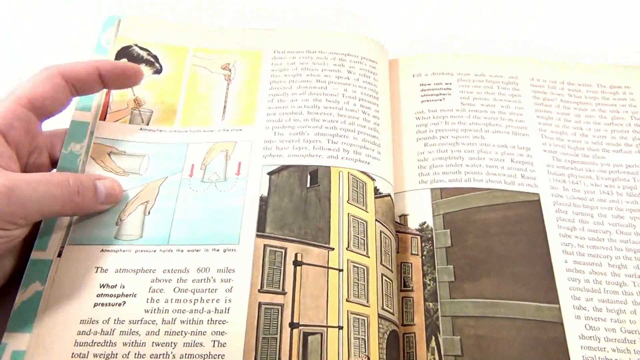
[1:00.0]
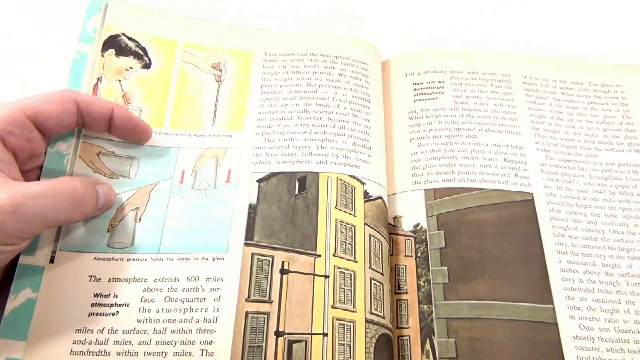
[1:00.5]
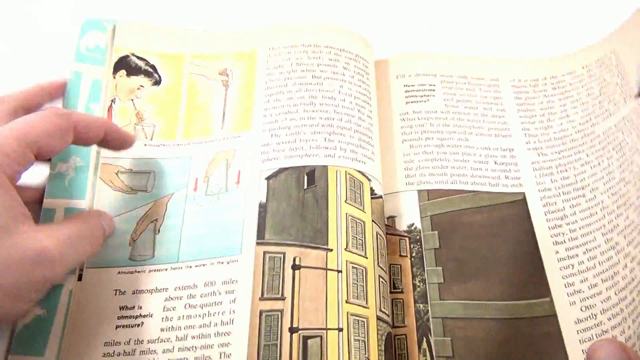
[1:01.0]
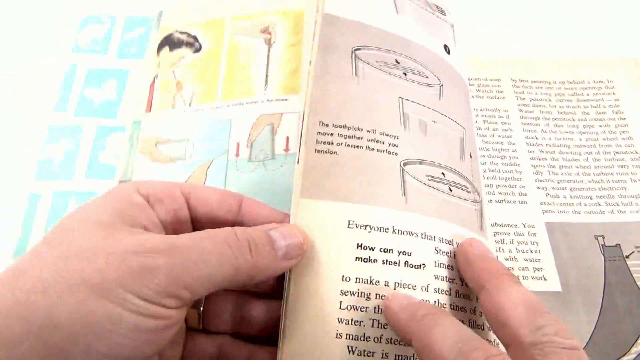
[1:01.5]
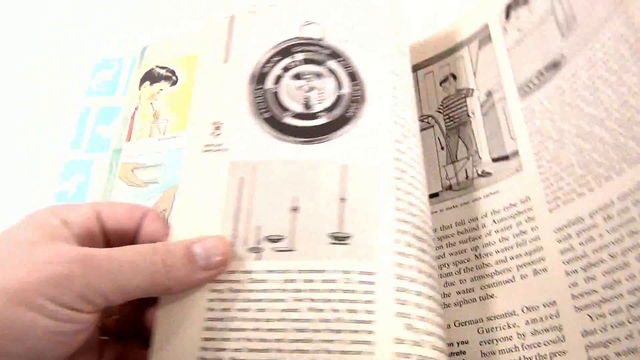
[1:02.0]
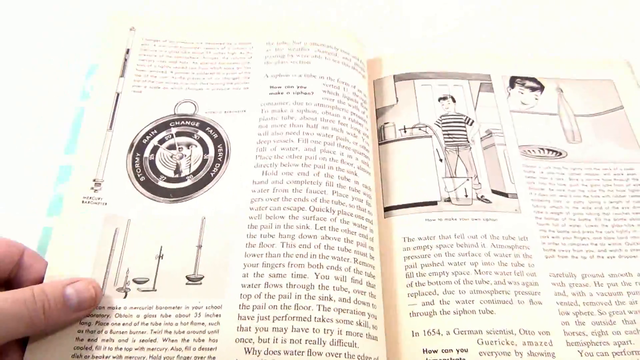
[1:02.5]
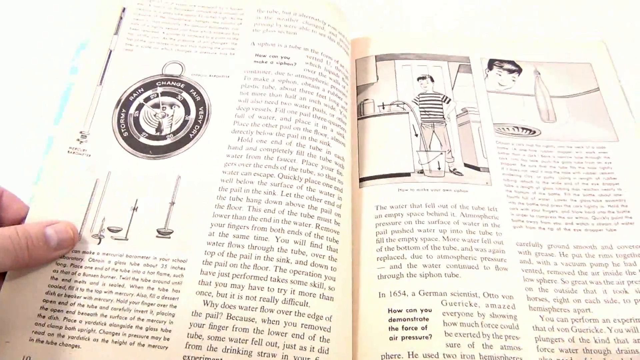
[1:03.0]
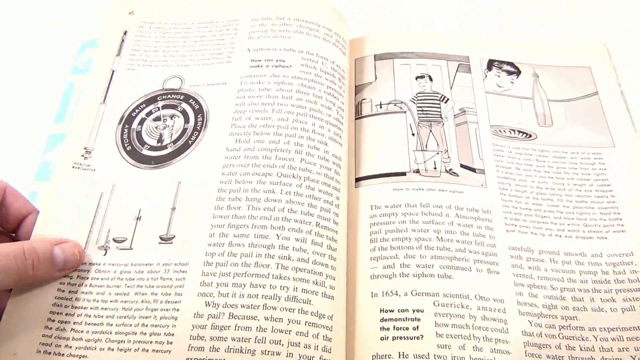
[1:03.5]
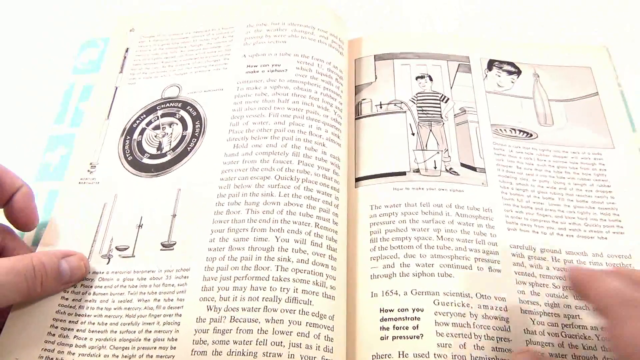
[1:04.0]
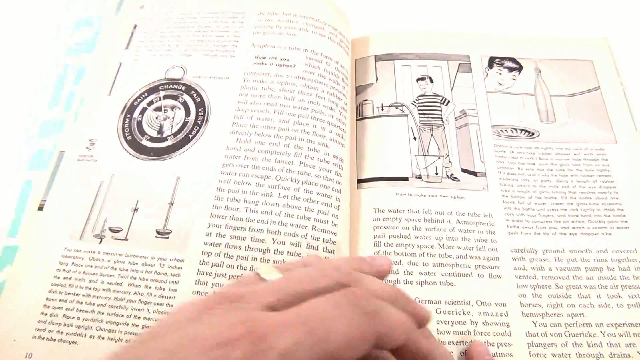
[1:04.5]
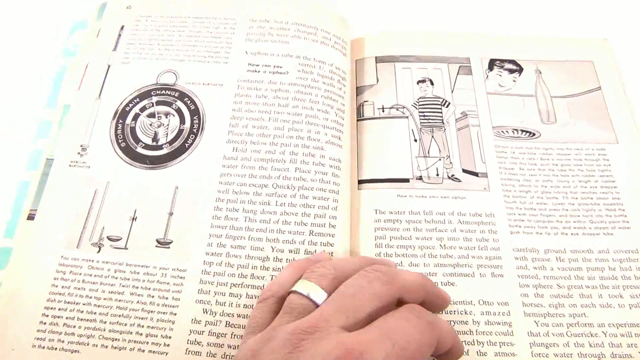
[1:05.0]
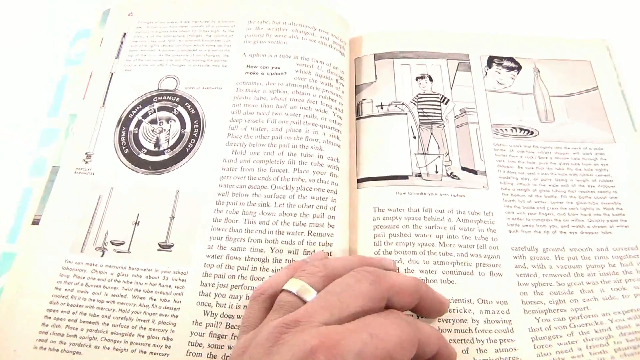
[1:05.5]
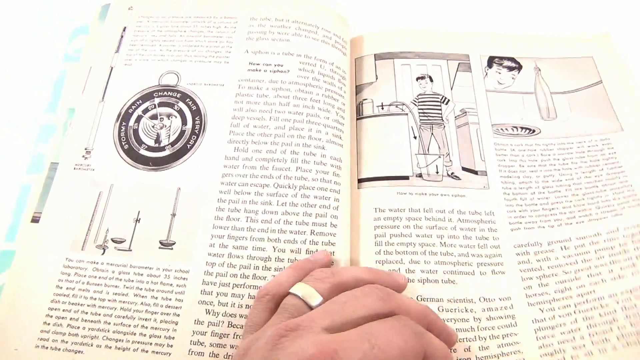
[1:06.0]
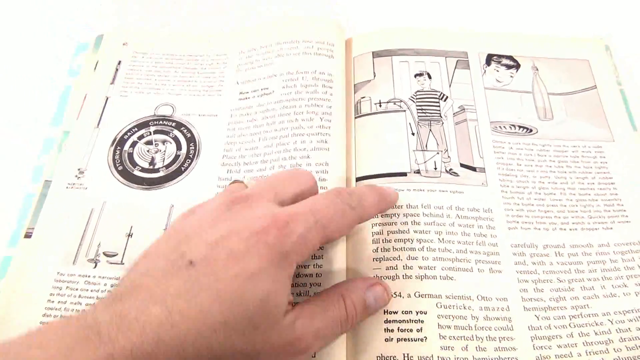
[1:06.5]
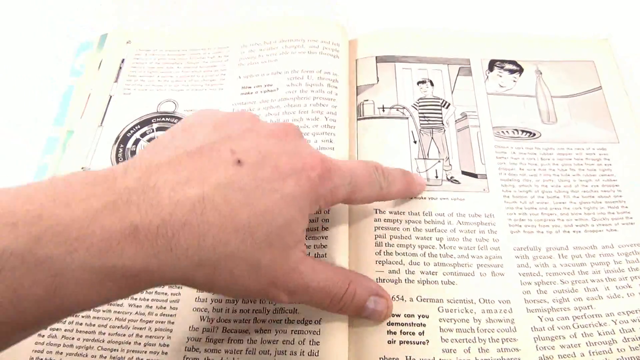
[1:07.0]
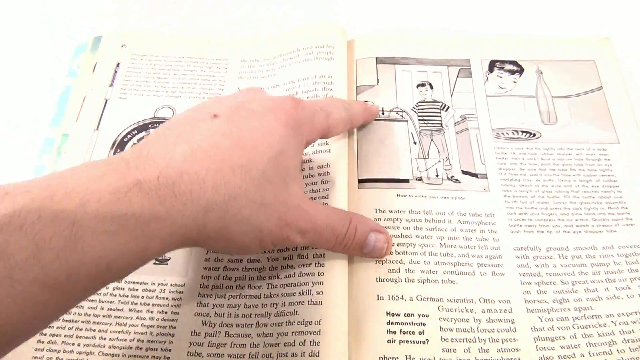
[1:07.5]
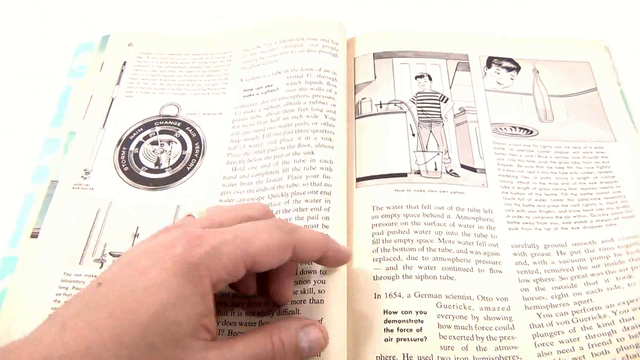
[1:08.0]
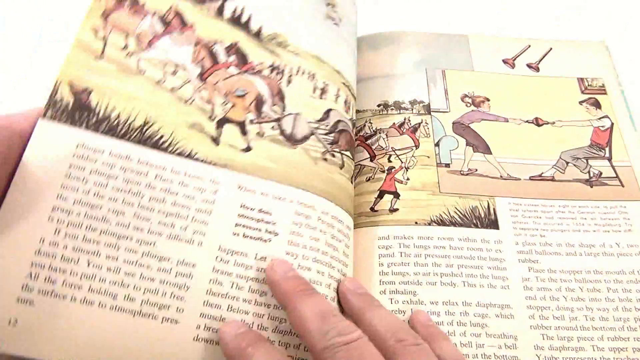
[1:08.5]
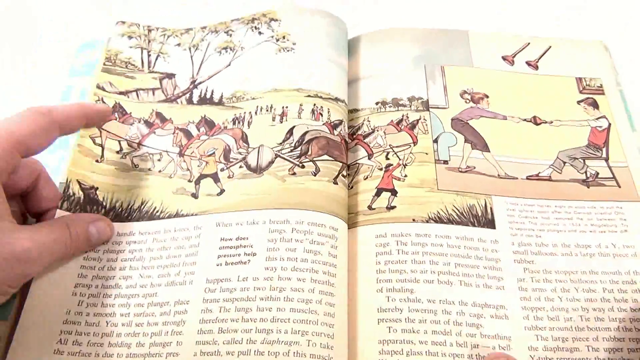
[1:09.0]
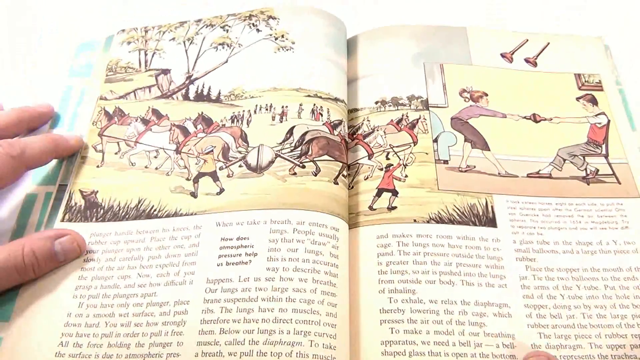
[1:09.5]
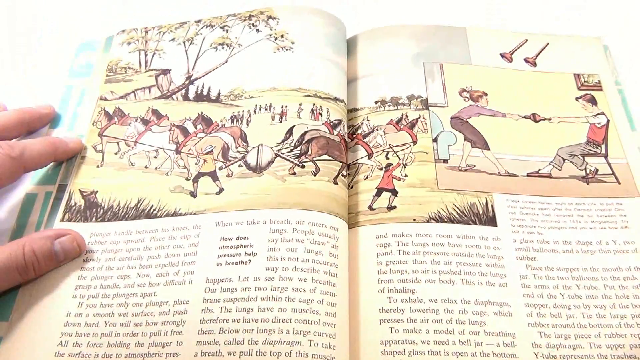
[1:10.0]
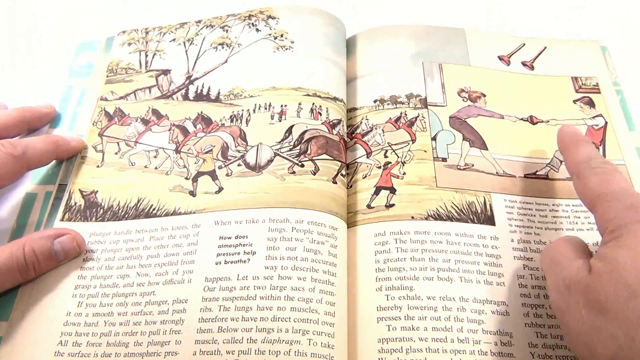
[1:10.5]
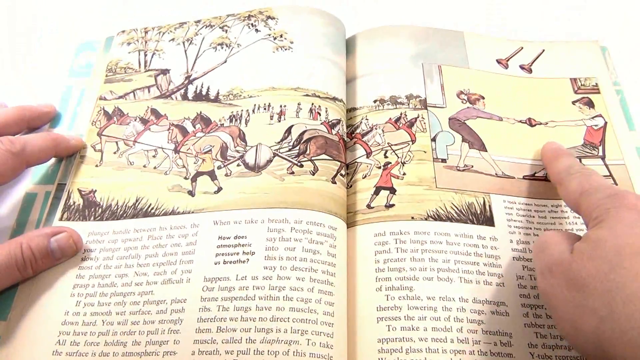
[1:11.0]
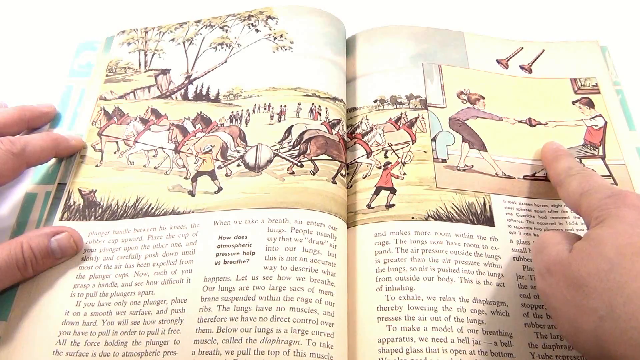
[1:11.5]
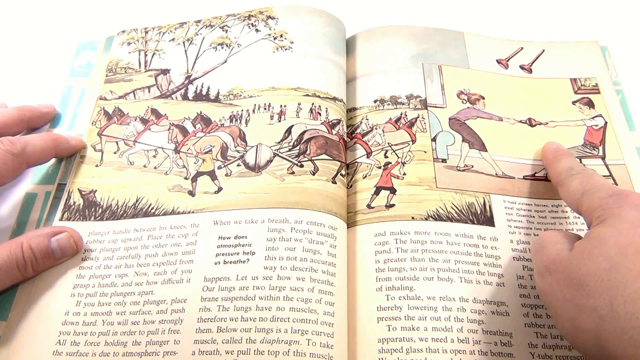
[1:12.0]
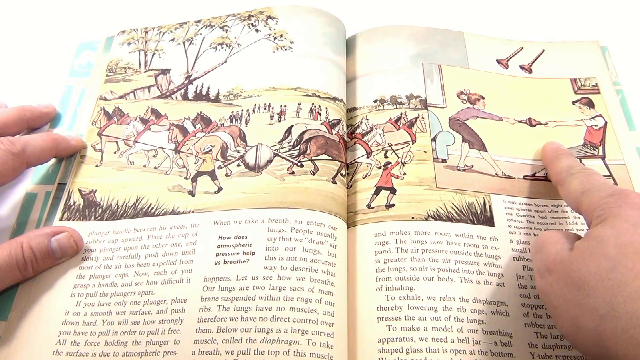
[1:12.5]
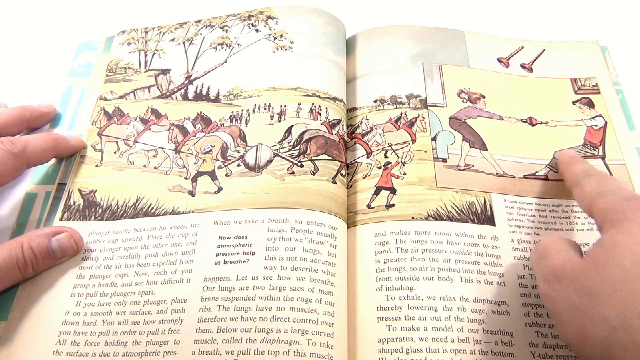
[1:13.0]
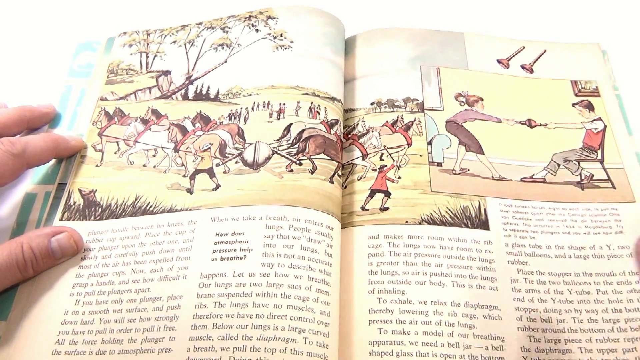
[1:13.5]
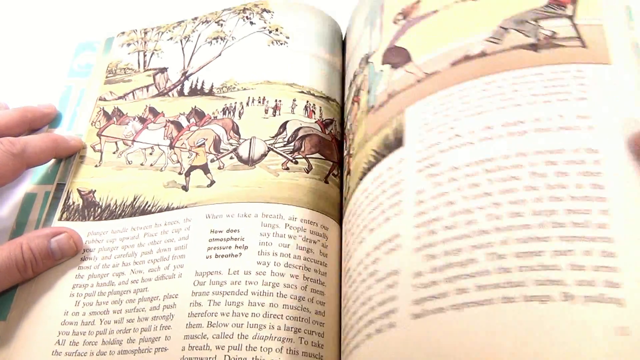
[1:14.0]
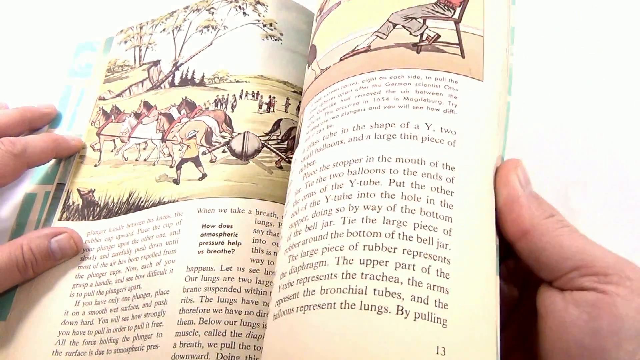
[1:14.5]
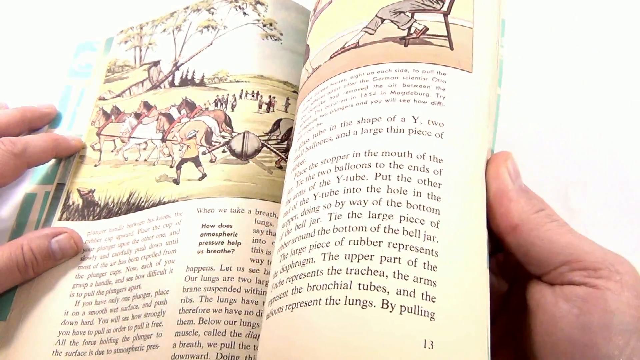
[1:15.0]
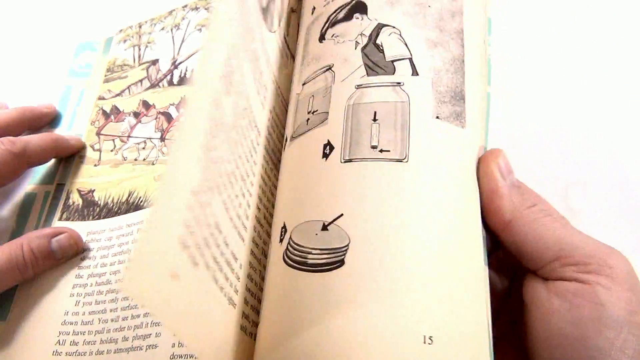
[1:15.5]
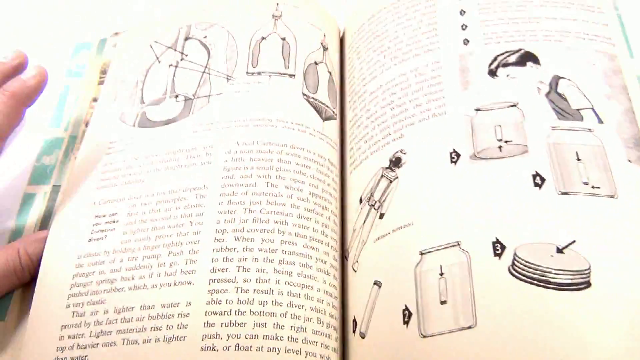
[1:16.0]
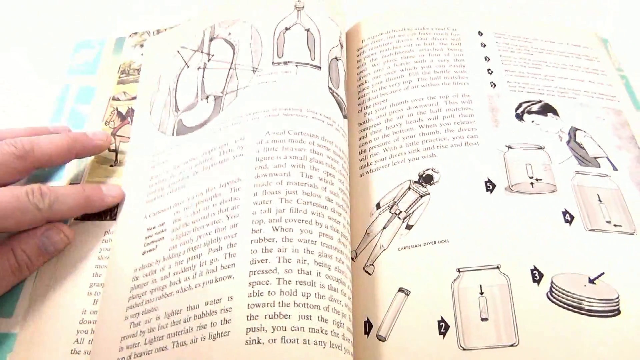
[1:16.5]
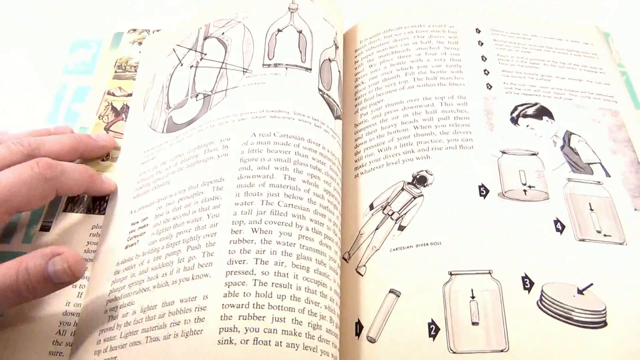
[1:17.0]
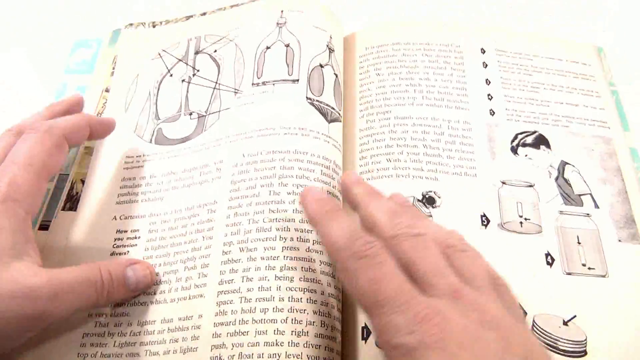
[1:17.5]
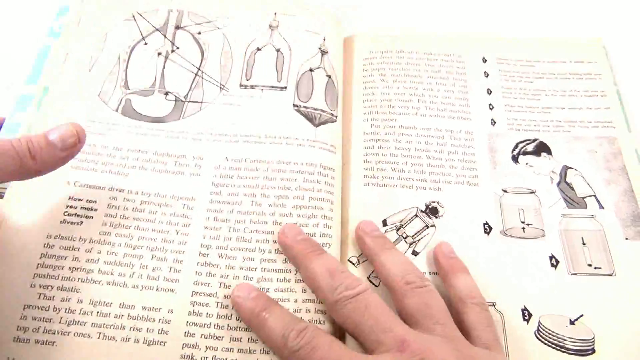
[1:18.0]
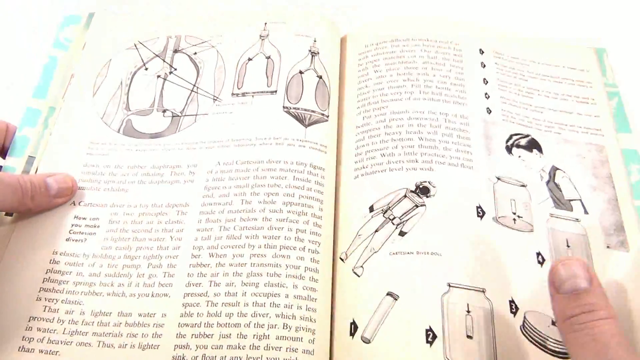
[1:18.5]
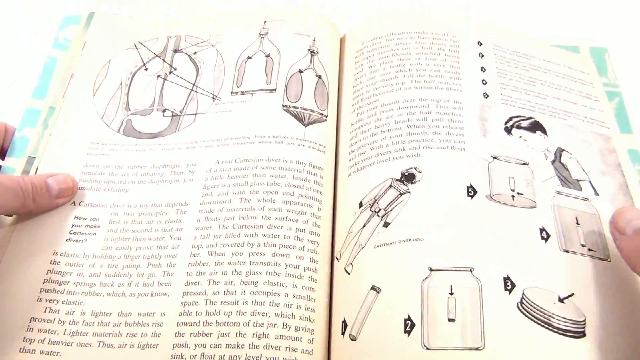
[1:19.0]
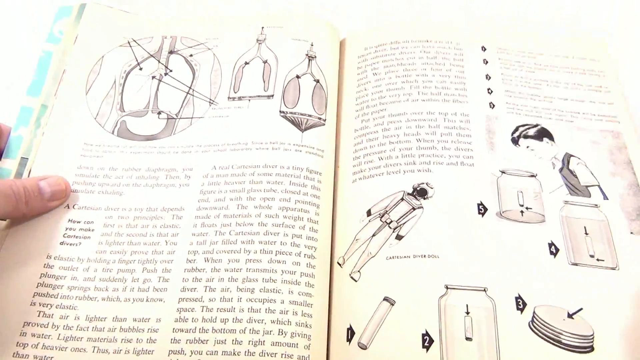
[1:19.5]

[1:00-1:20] Inside the brochure, a hand that appears to be white holds the left page. At the top of the left page is a yellow rectangle with a little boy with dark hair and light skin who appears to be sipping something out of a cup. Right under it is an off-blue image with hands: in the first, a hand appears to be holding out an open cup; in the second, the cup is held extended in the air; in the third, the hand puts the cup down on a surface. In the center is an image of some type of building that looks like an apartment building, pink and yellow with several windows. There is writing all around the pictures. The person flips the page again, showing what looks like a tire or a timer and a boy letting water go into a bucket. He flips again to a cartoon-style picture of two people tugging on something on the right, then flips to a page with several different pictures.